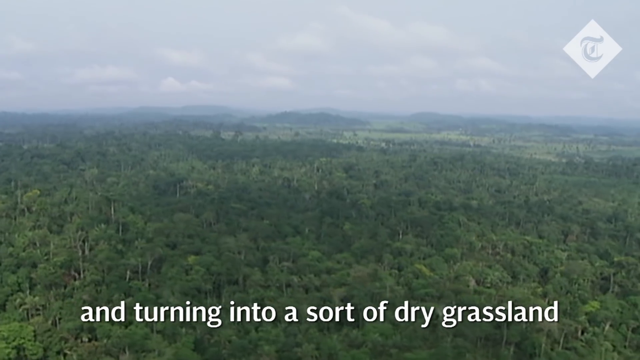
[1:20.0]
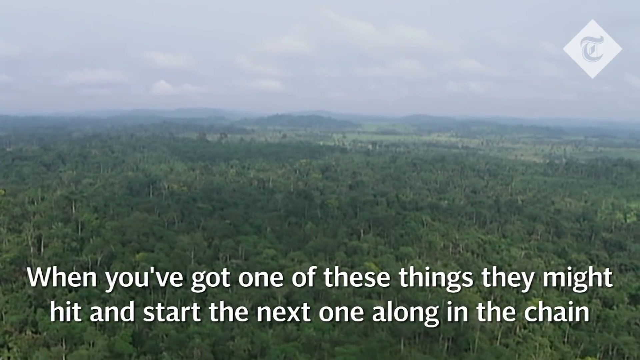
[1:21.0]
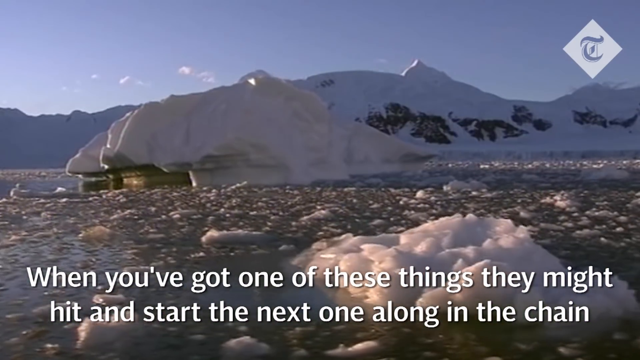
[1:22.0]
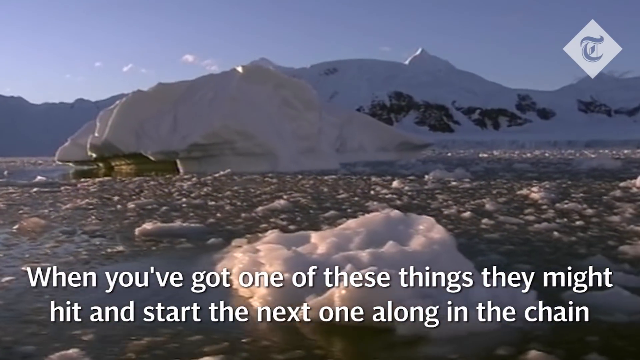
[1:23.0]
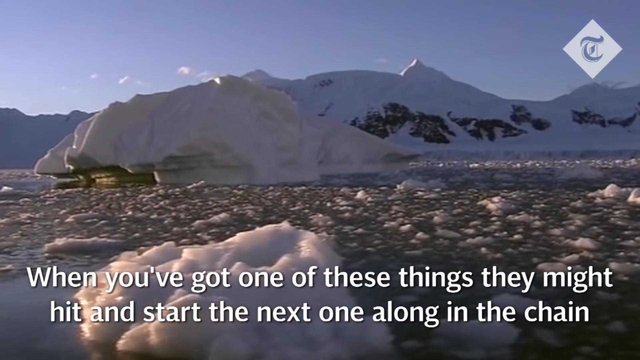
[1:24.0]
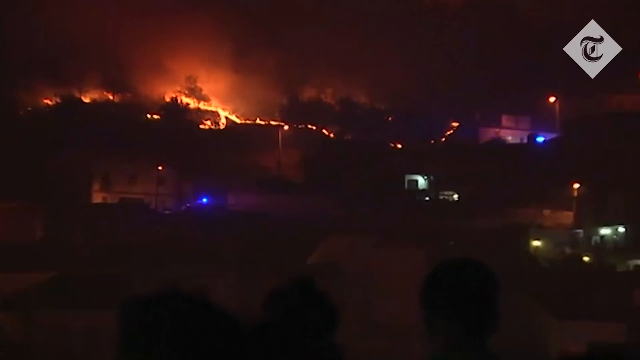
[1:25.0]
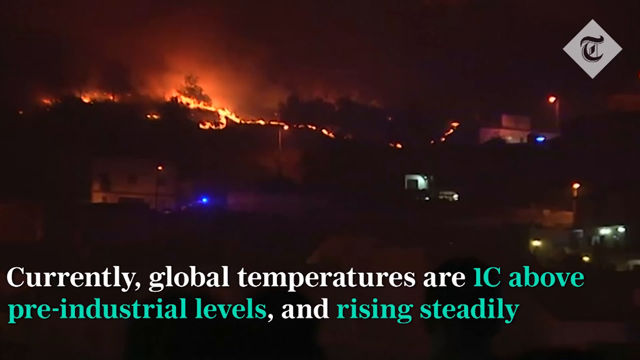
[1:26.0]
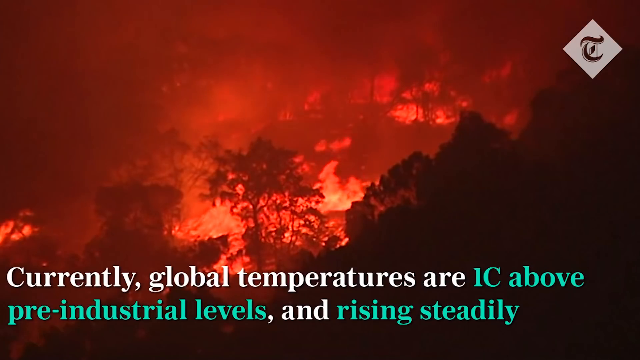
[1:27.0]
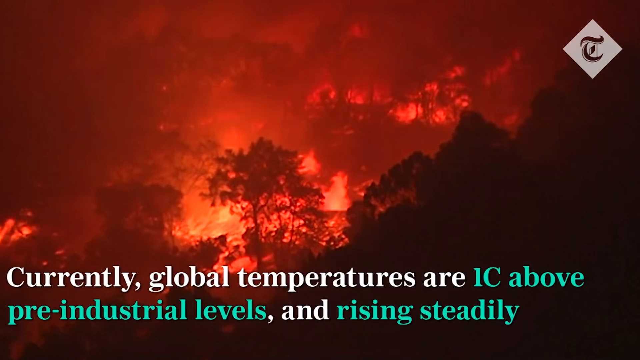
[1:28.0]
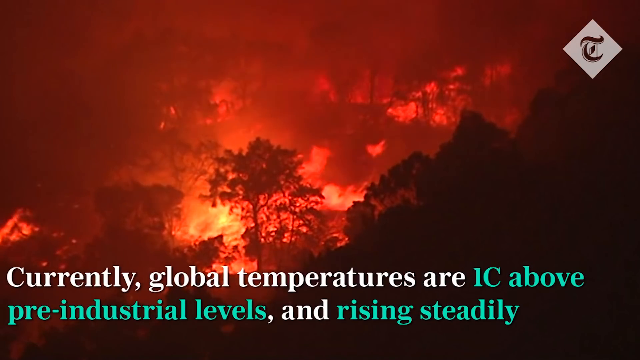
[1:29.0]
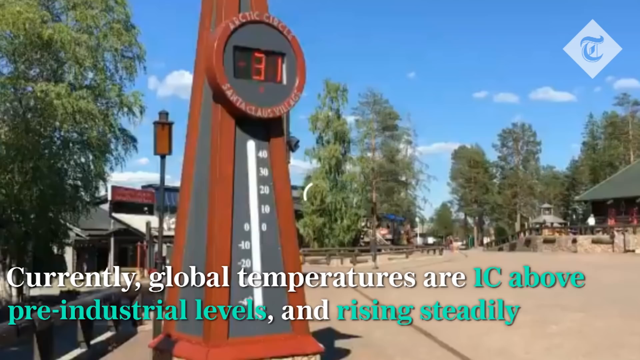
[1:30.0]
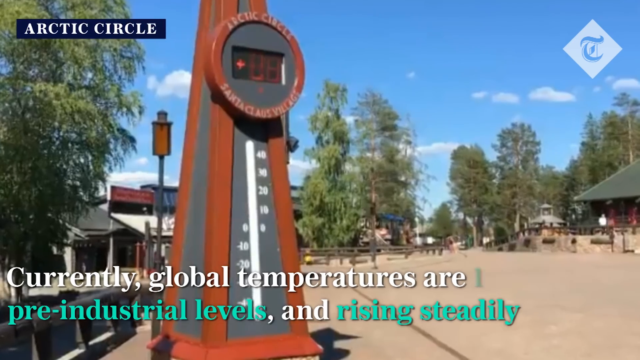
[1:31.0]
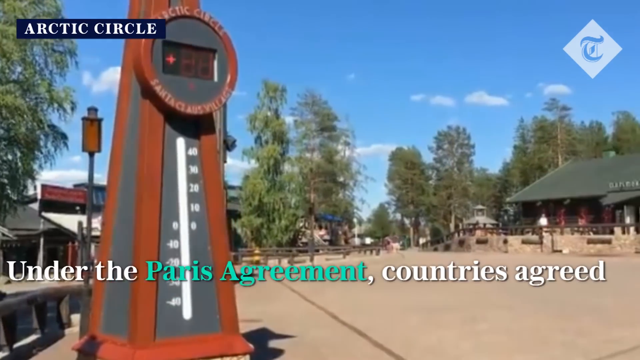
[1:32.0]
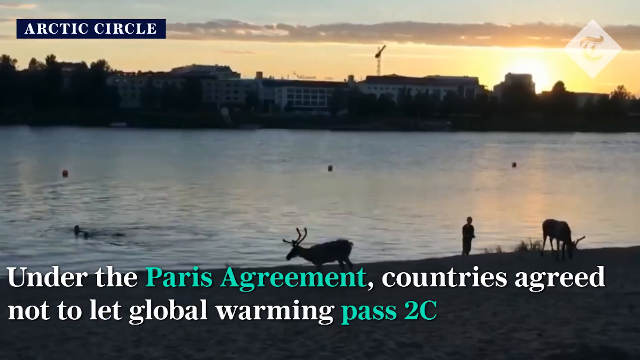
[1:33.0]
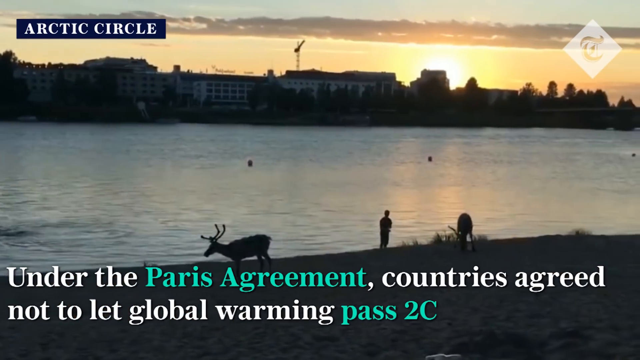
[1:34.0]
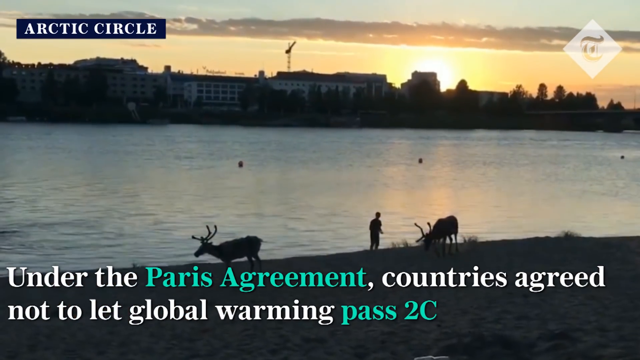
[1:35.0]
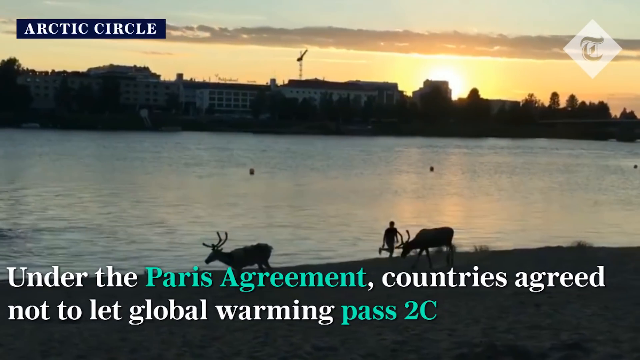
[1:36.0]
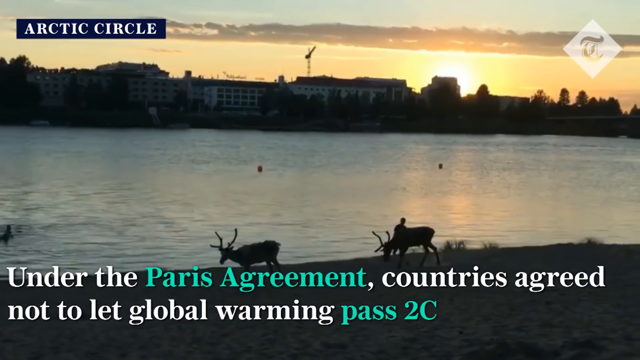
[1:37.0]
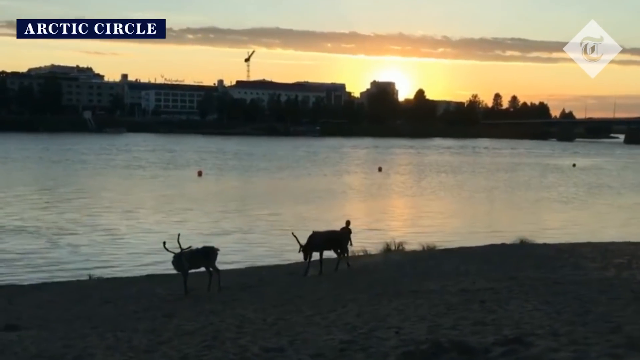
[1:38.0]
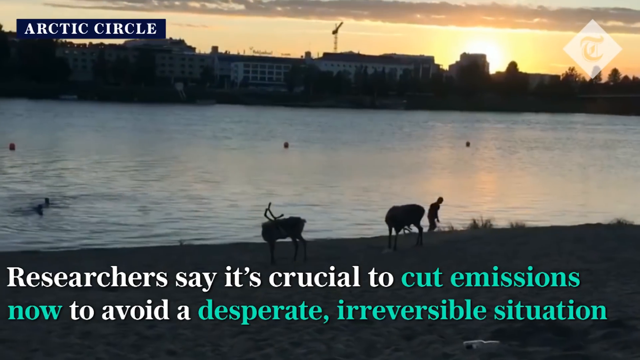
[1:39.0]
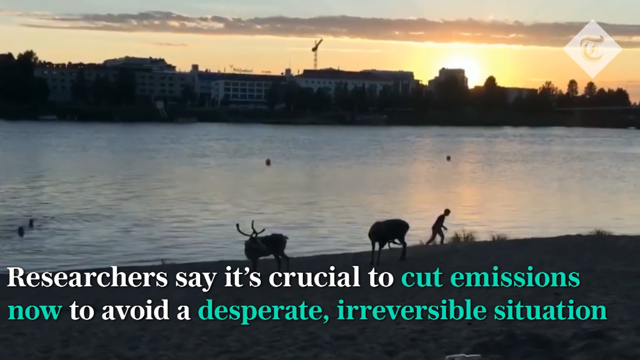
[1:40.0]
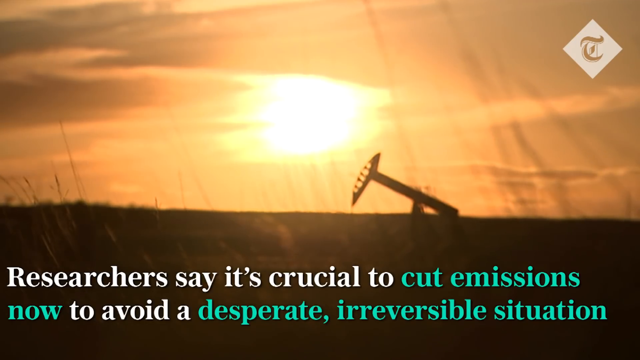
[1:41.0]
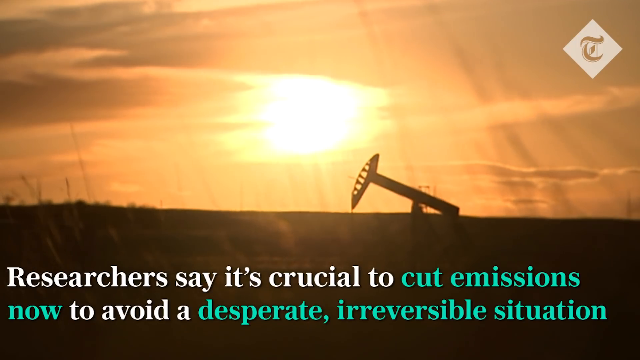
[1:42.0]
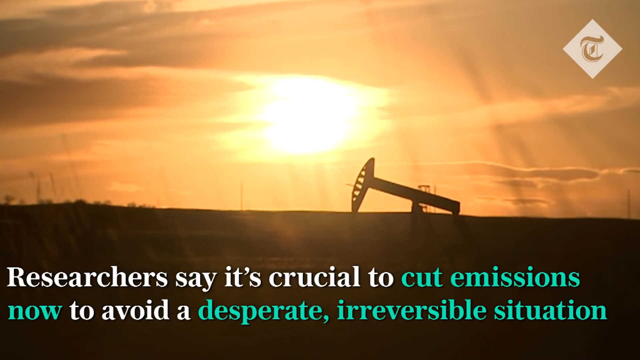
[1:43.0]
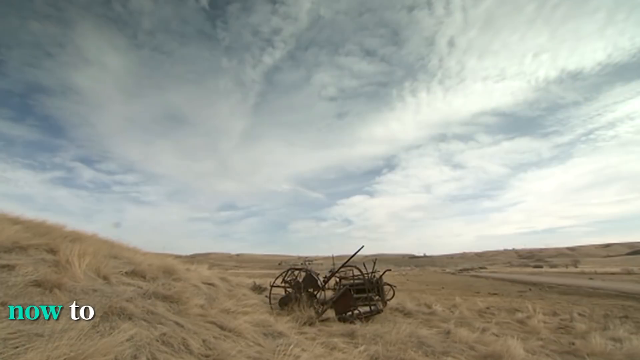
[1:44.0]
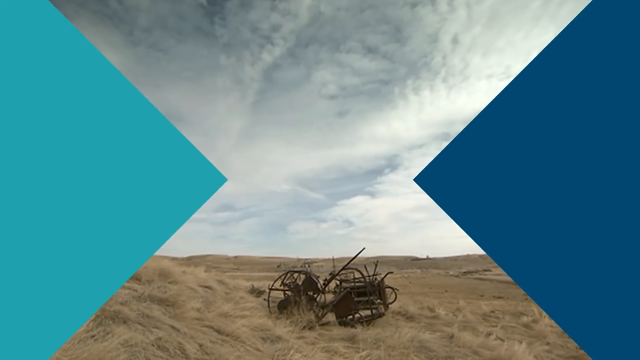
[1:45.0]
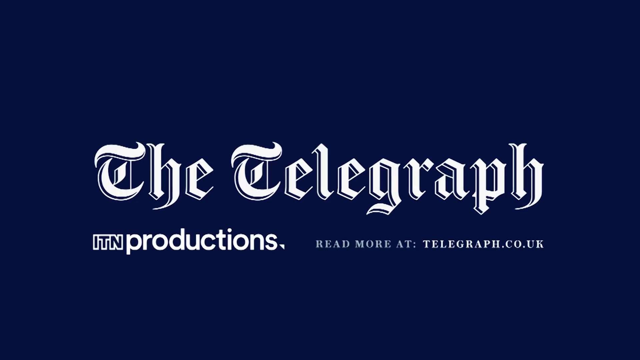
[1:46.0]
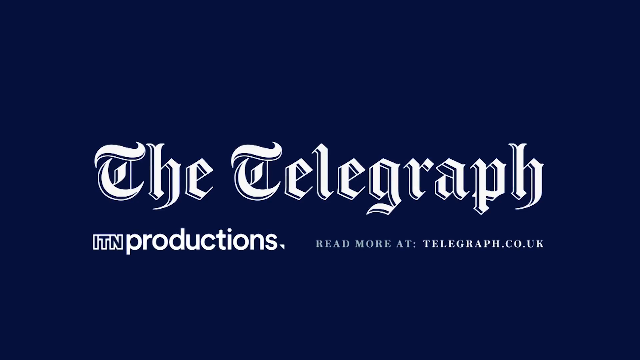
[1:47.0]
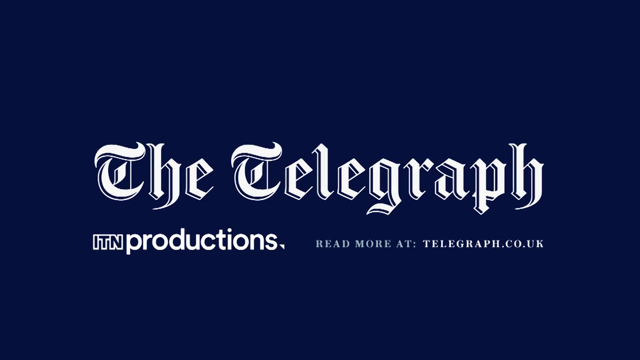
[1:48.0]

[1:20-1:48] A forest with a lot of trees appears; some are green, but not very green, and the trees seem affected by heat. A pop-up appears on the screen. A mountain with a lot of ice is shown, apparently in China. The screen changes to show a lot of fire. People are next to a river, and animals are walking next to the river. Text is written on the screen, apparently the name of the company giving the news.